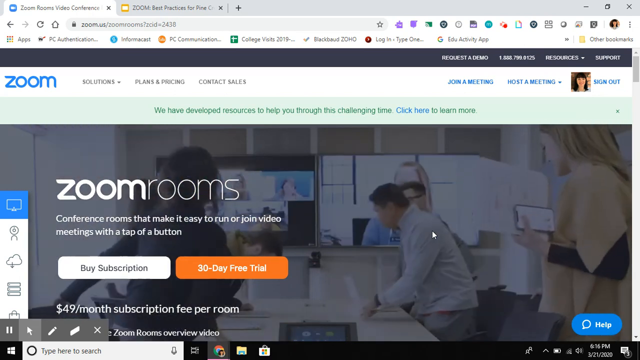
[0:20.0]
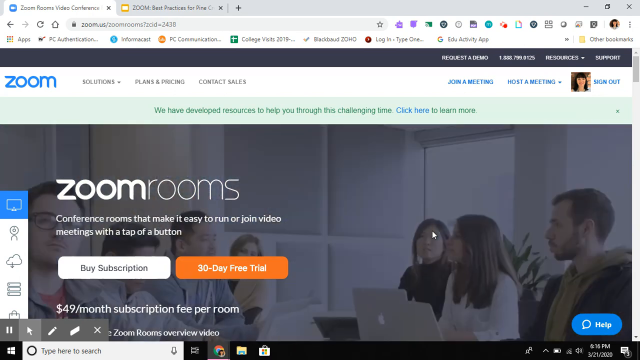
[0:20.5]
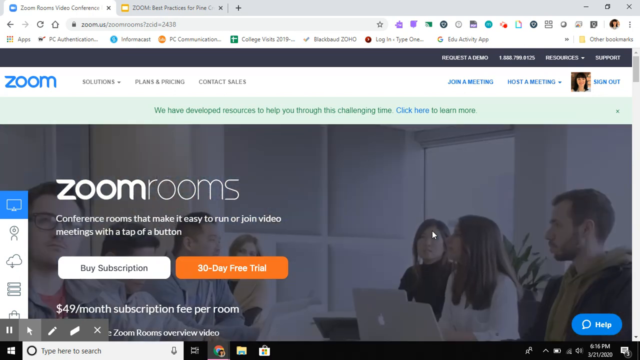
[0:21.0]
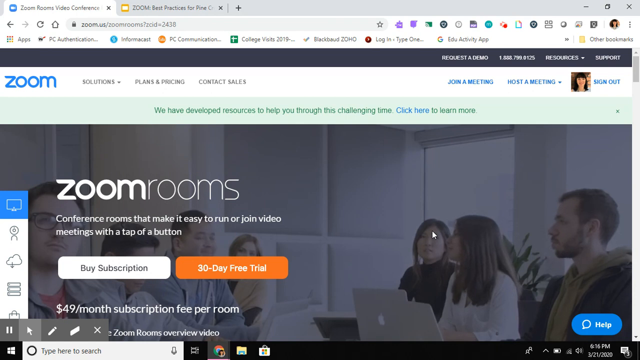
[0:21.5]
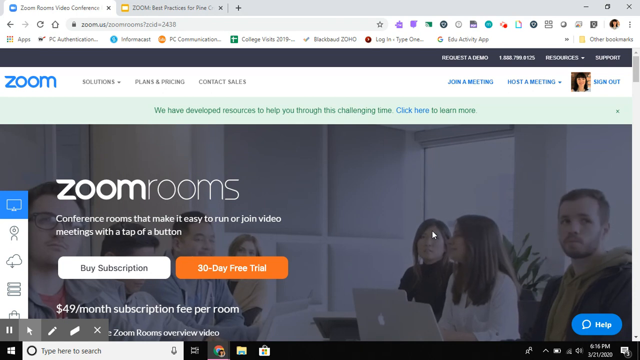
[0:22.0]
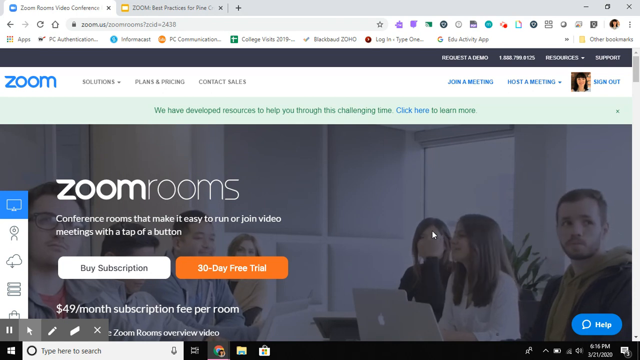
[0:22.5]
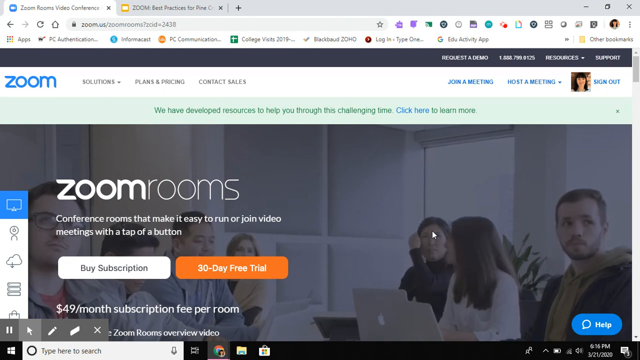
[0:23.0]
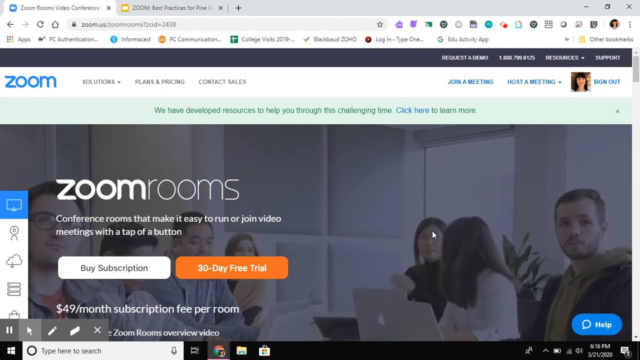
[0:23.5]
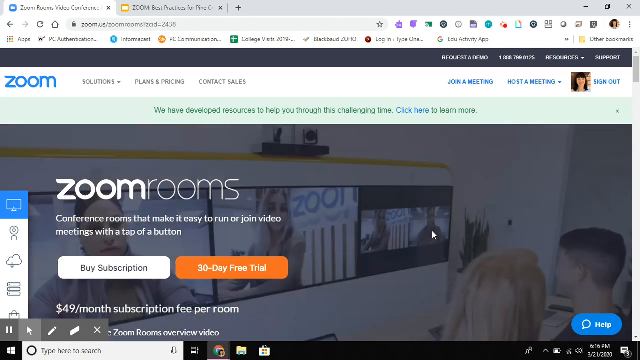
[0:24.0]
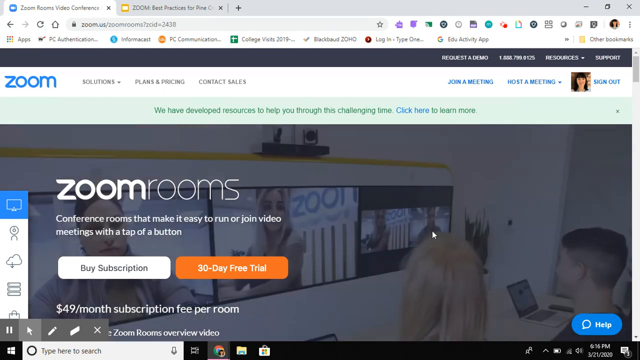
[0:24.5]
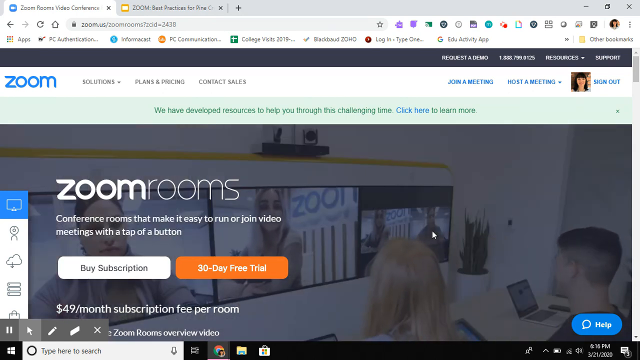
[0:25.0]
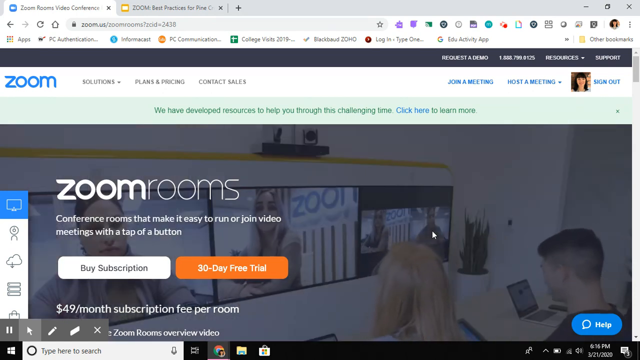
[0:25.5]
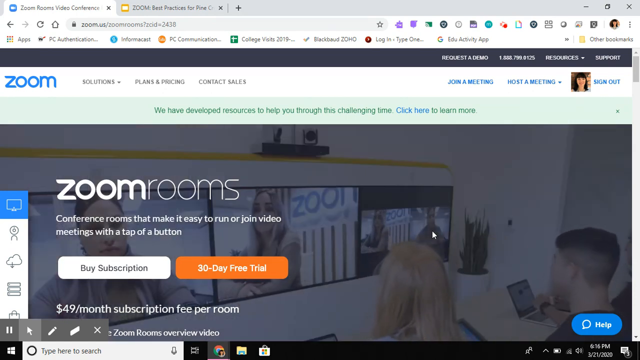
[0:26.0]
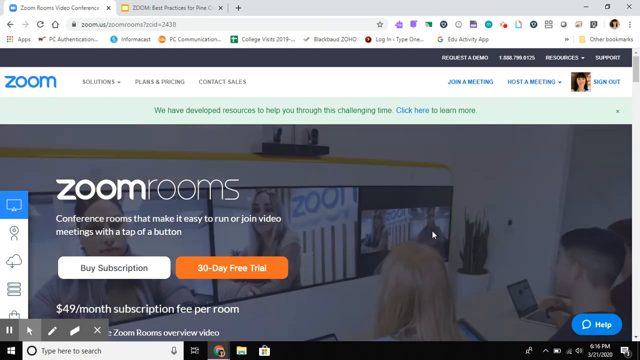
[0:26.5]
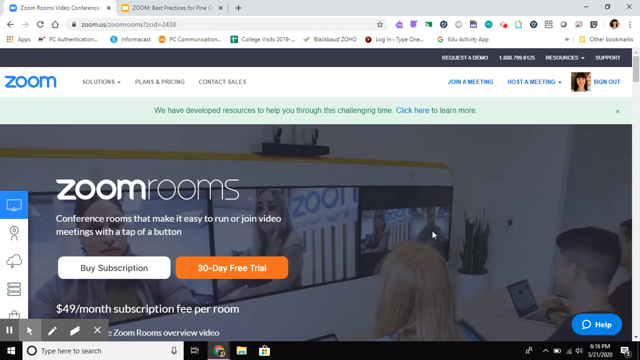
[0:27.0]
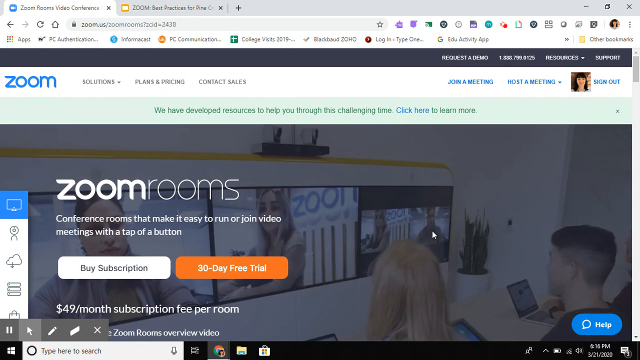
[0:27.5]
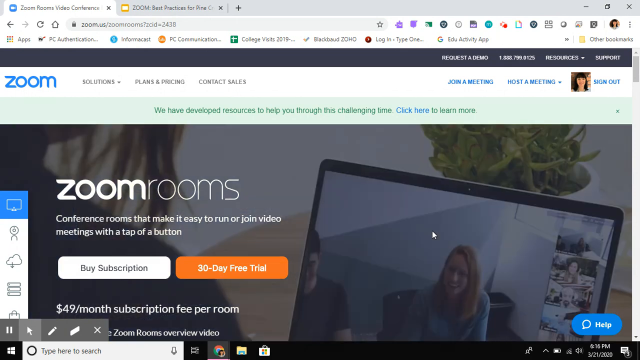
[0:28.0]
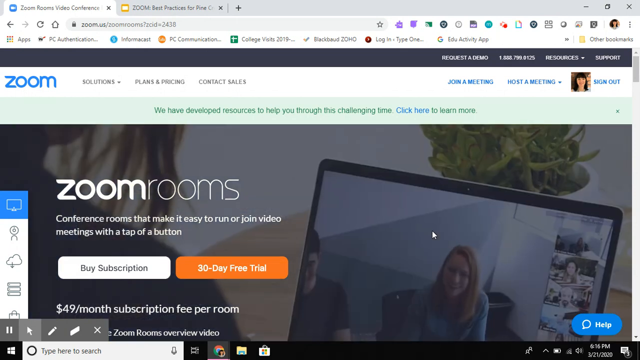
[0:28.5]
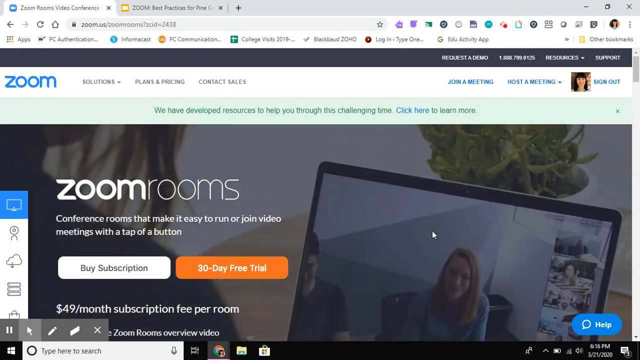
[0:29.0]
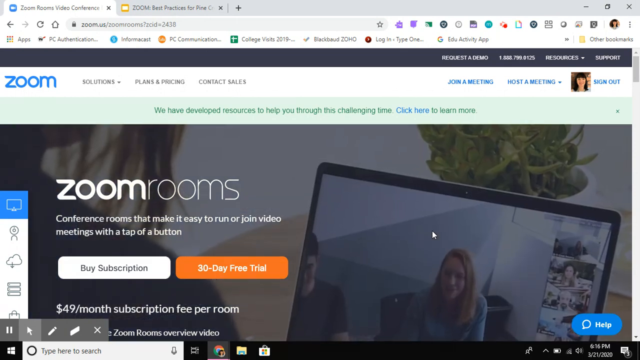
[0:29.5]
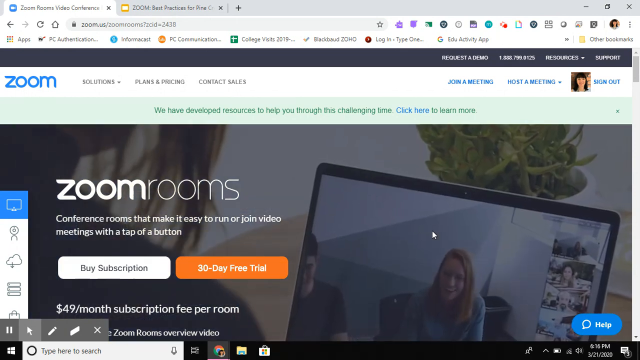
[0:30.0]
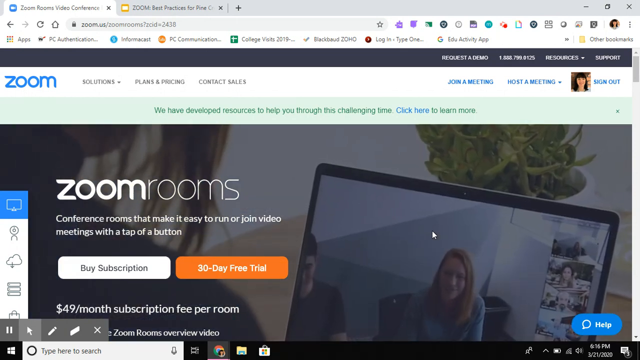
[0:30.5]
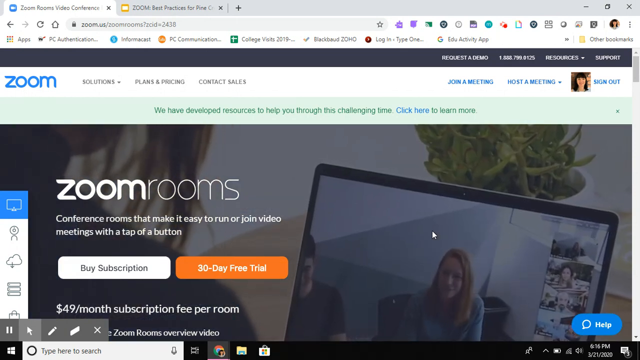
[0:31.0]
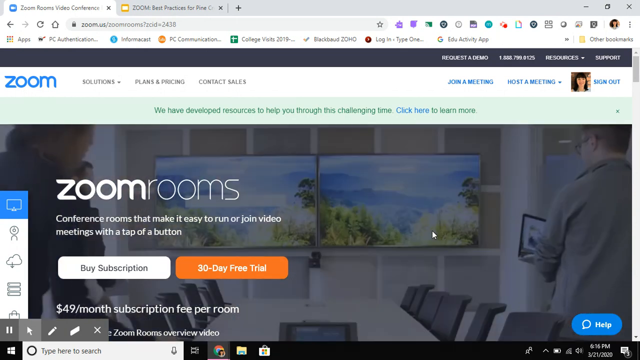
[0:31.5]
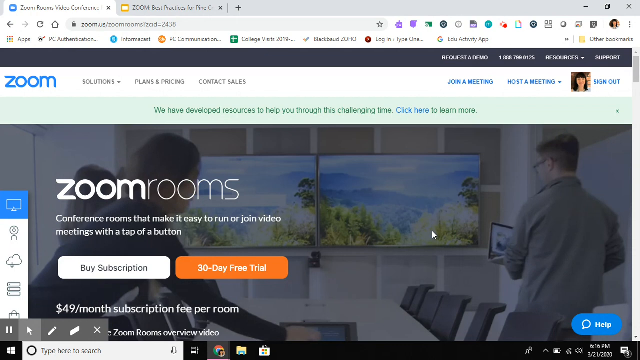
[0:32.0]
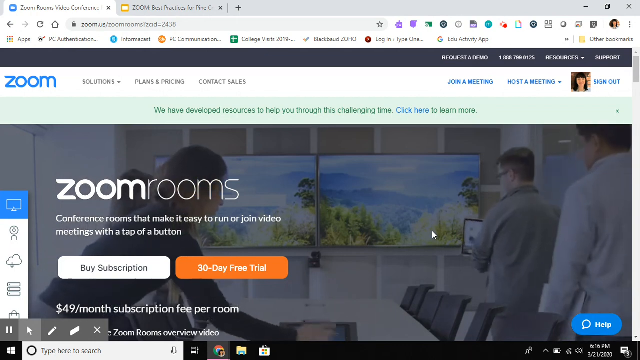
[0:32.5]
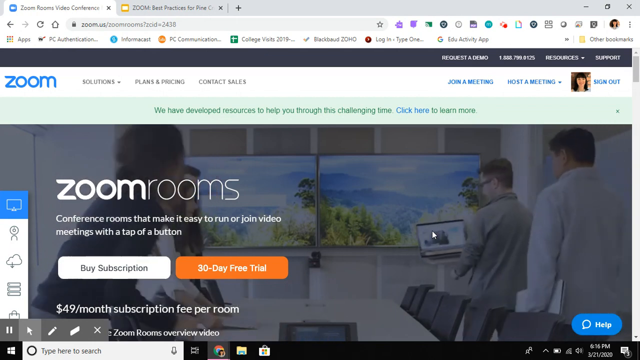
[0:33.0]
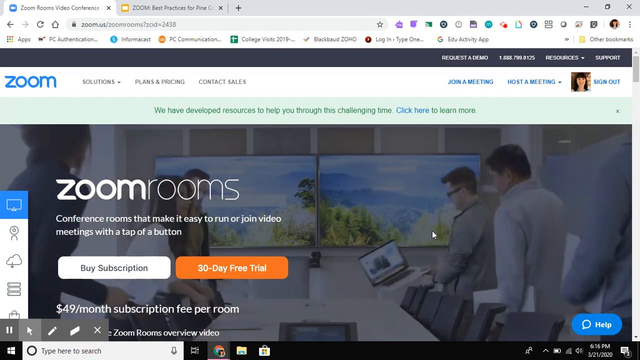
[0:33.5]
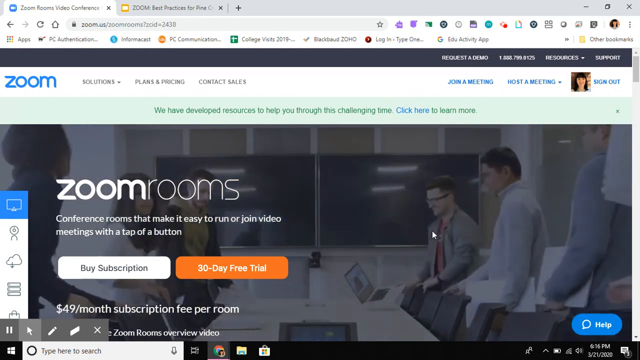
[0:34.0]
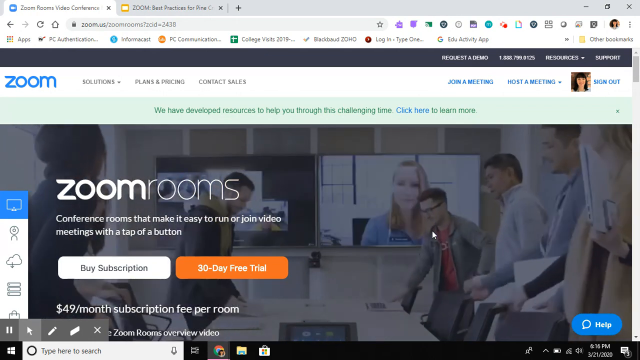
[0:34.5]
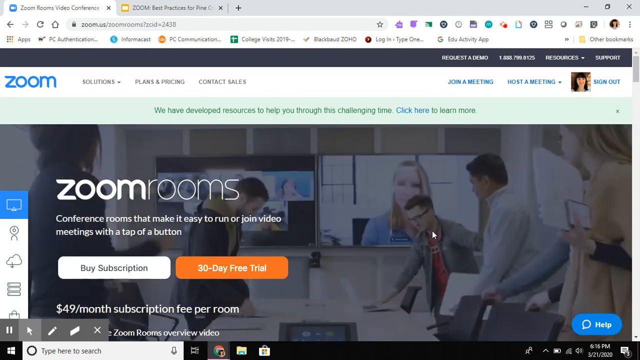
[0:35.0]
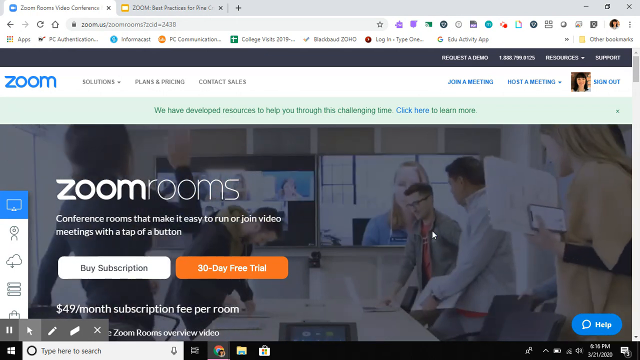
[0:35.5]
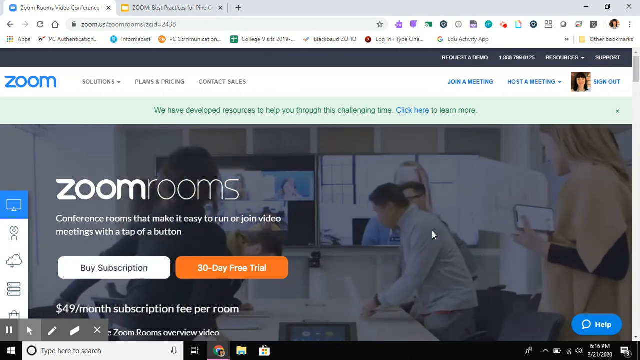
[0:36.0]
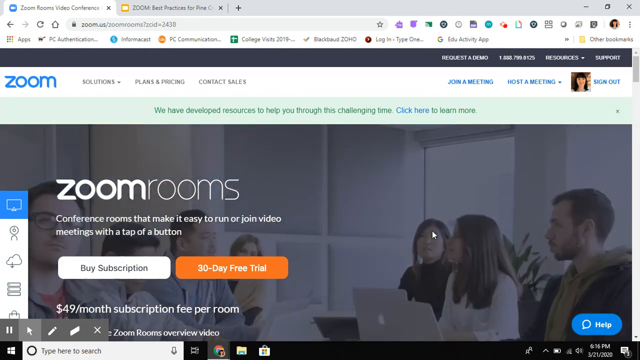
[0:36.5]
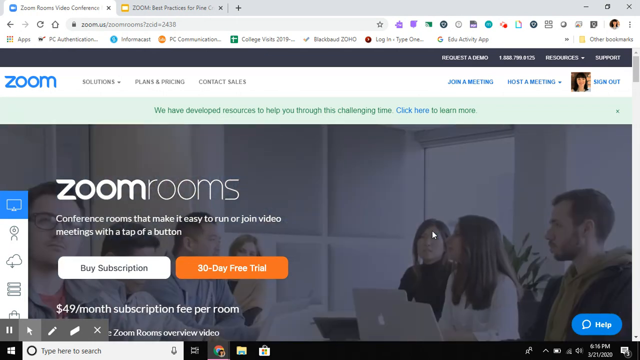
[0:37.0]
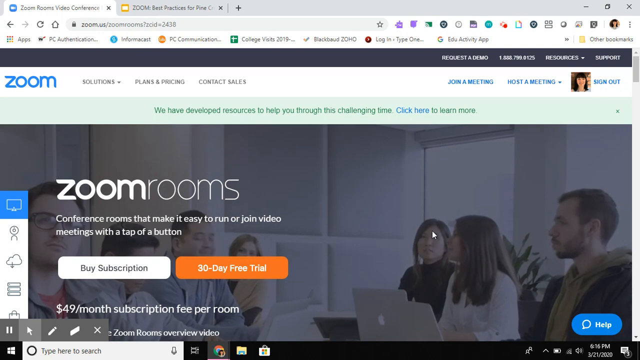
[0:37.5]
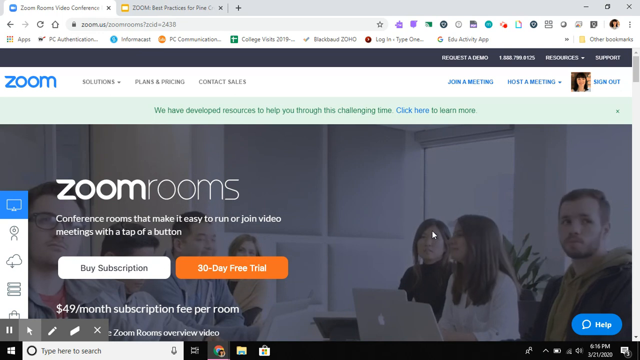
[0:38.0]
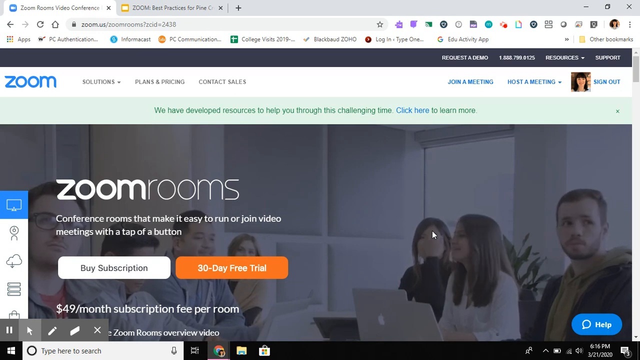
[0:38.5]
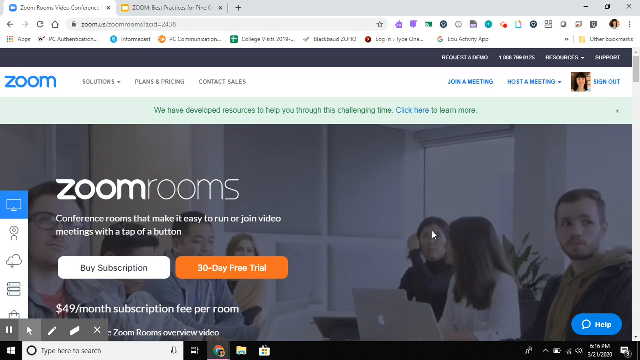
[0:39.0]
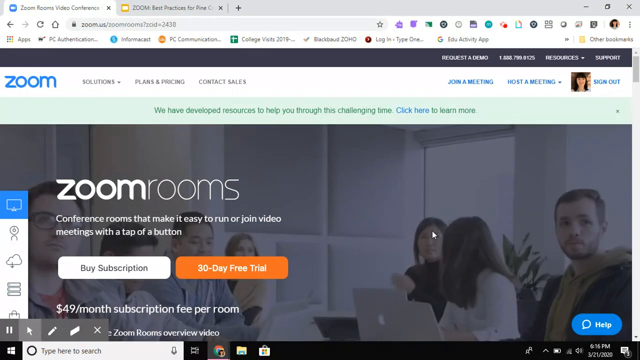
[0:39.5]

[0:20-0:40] The Zoom advert continues, showing people inside a meeting room while others who could not be present join from home using Zoom. There are at least seven people in this office meeting, sitting next to one another, with laptops or pens on the tables. On the right side are three females and one male: of two of the females, one wears a black t-shirt and the other a white t-shirt, and the male wears a black t-shirt with a green hoodie. On the left side are four people, three males and one female; the female wears a yellow t-shirt and the males wear grey t-shirts and grey jackets. The background has slightly grey insulation foam panels mounted on white walls, with windows on the right side. A set of three monitors is mounted on the wall.